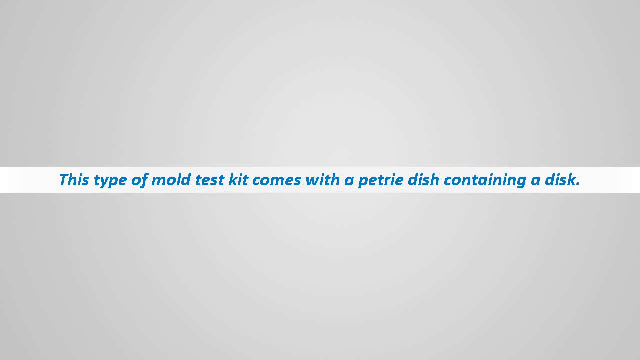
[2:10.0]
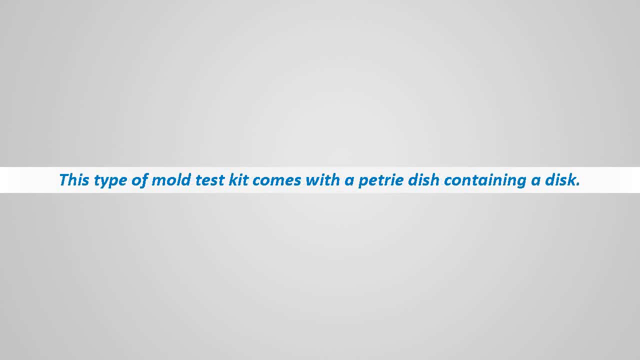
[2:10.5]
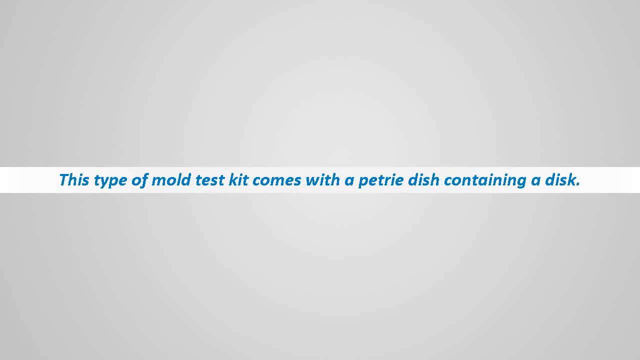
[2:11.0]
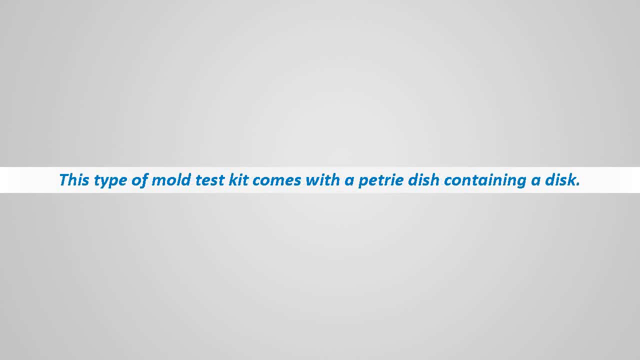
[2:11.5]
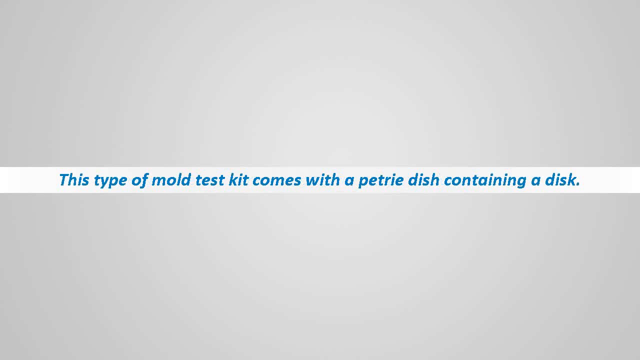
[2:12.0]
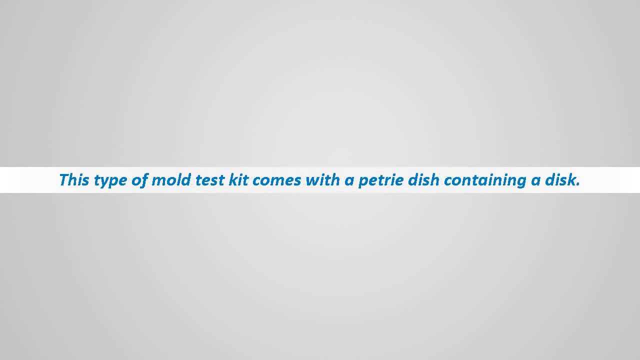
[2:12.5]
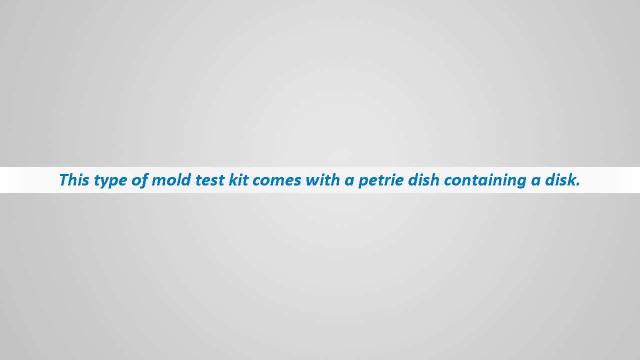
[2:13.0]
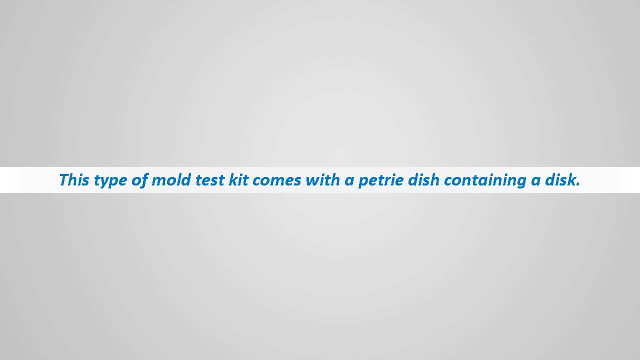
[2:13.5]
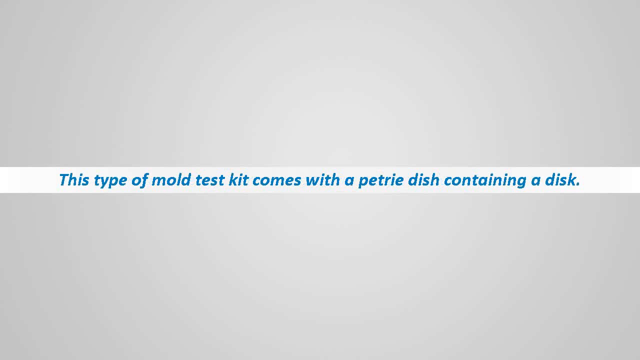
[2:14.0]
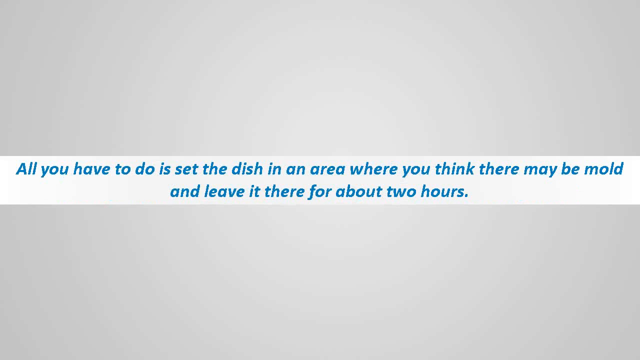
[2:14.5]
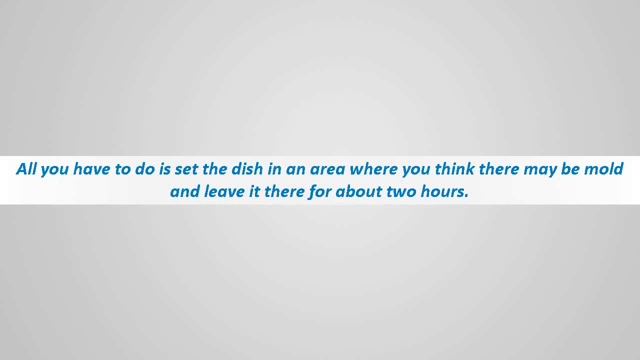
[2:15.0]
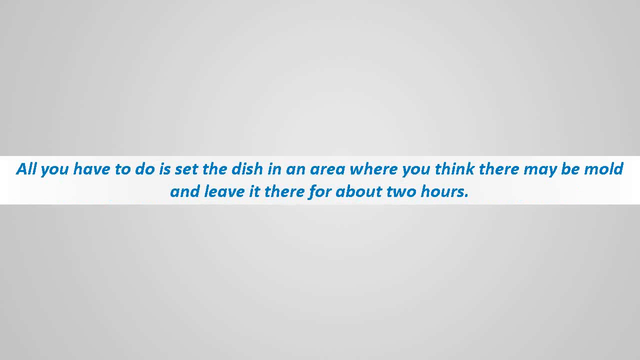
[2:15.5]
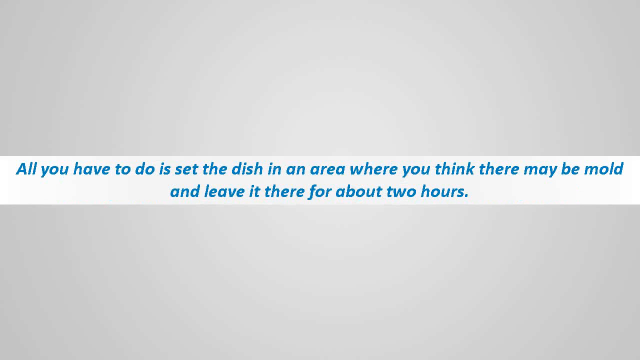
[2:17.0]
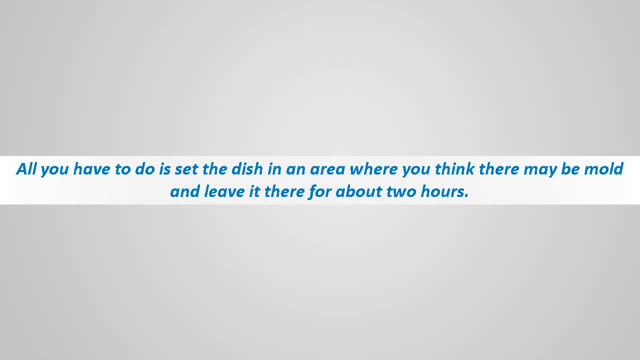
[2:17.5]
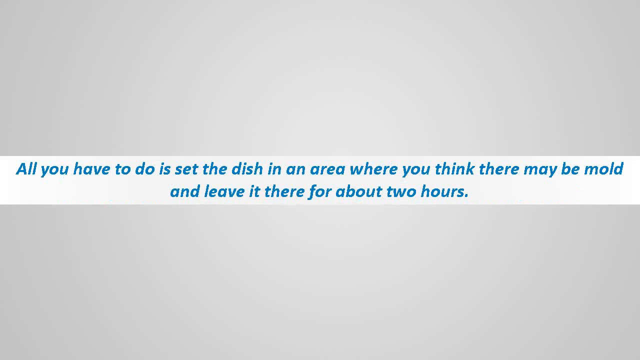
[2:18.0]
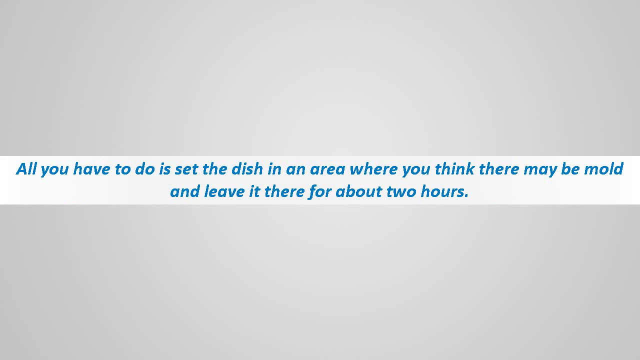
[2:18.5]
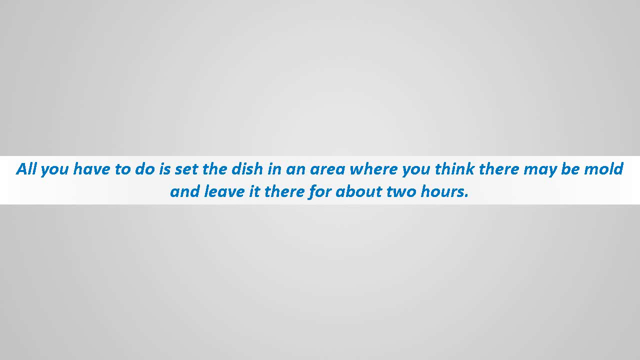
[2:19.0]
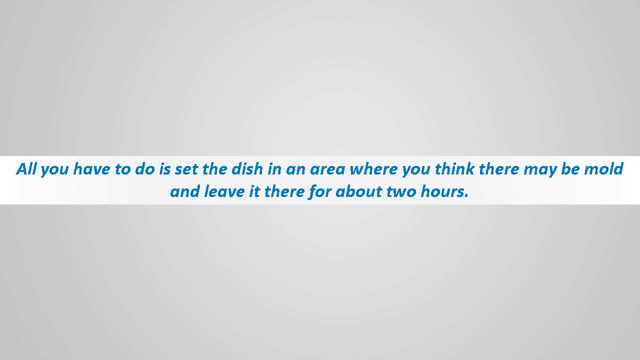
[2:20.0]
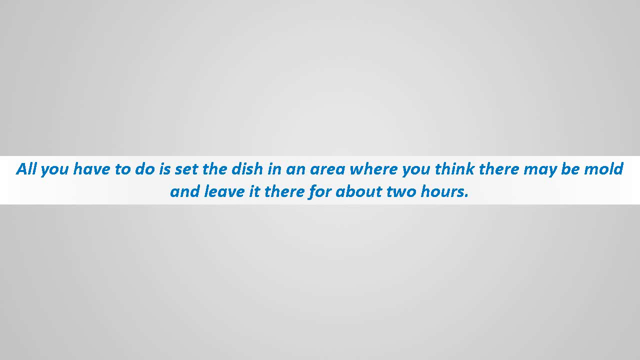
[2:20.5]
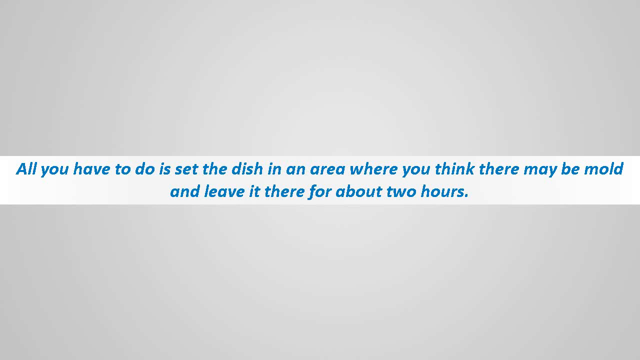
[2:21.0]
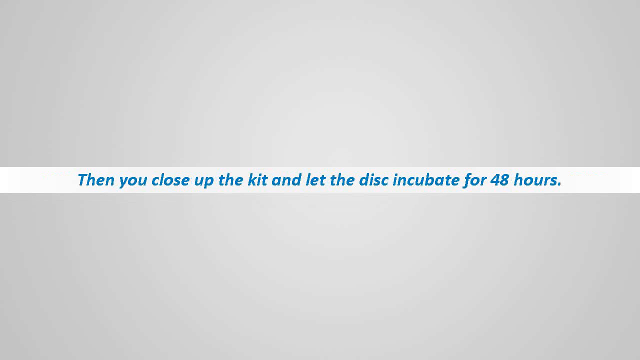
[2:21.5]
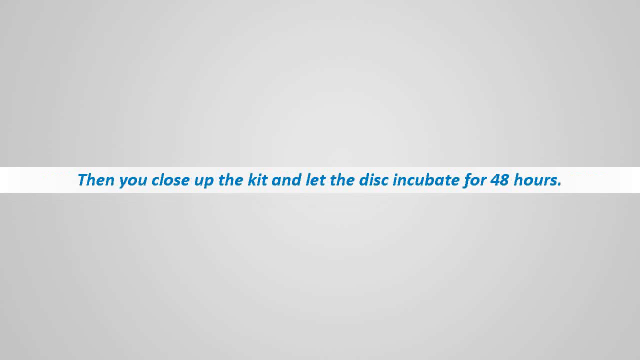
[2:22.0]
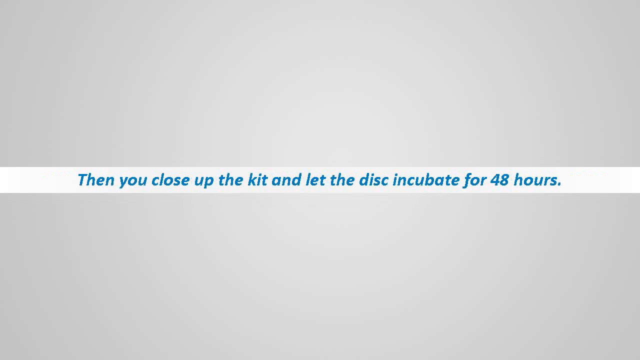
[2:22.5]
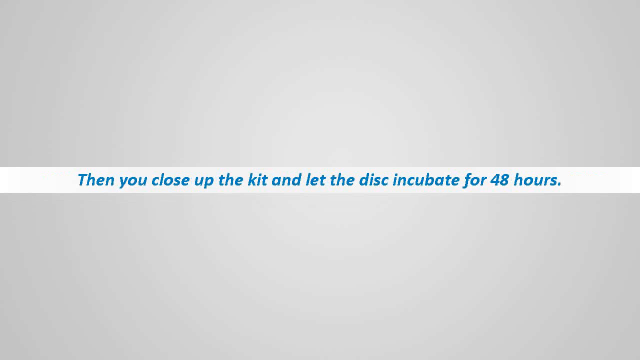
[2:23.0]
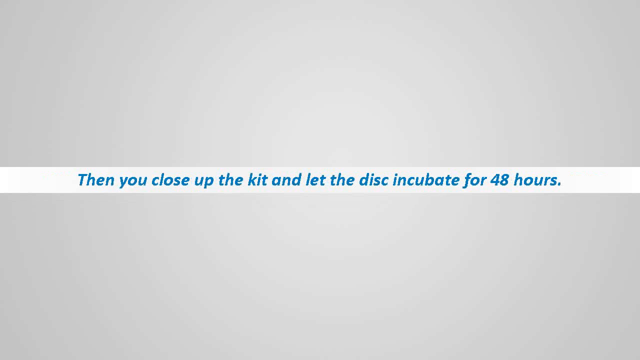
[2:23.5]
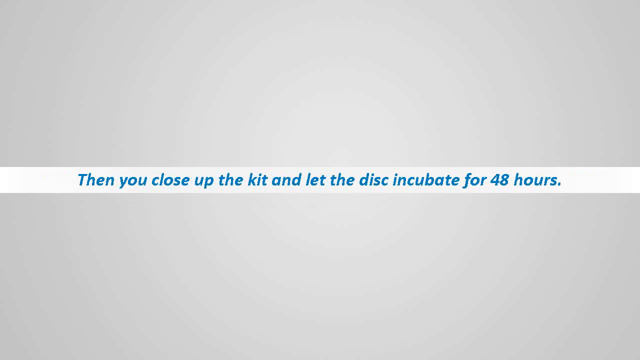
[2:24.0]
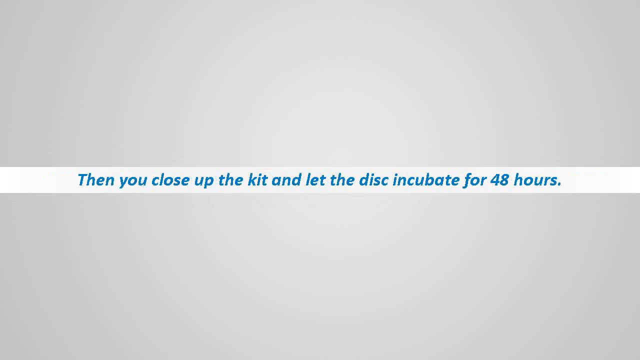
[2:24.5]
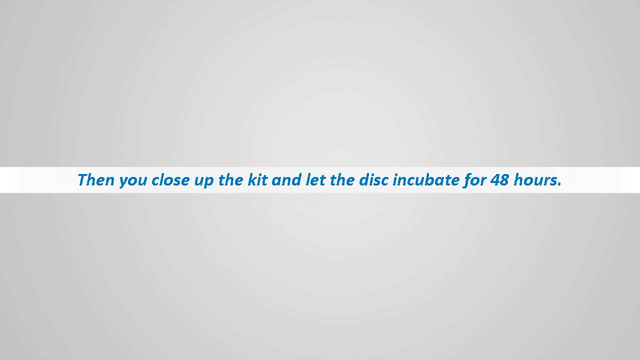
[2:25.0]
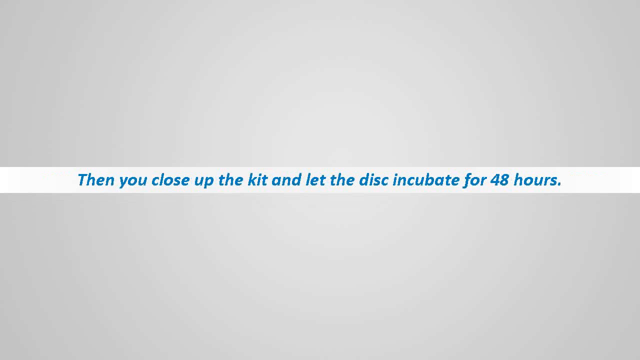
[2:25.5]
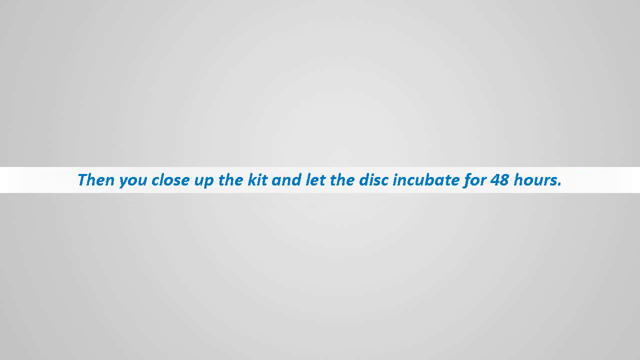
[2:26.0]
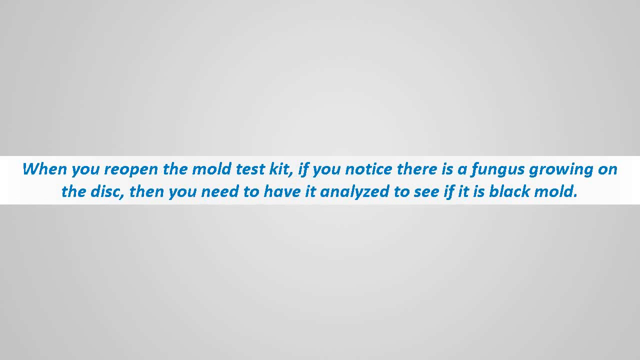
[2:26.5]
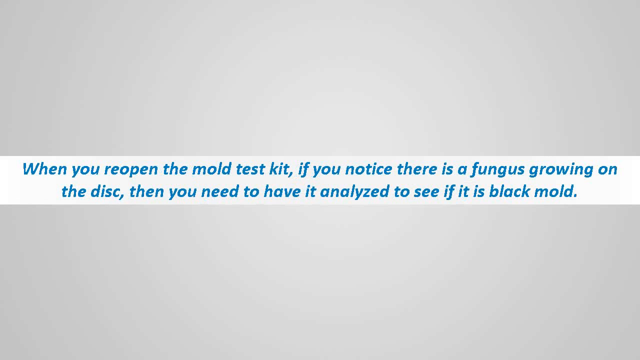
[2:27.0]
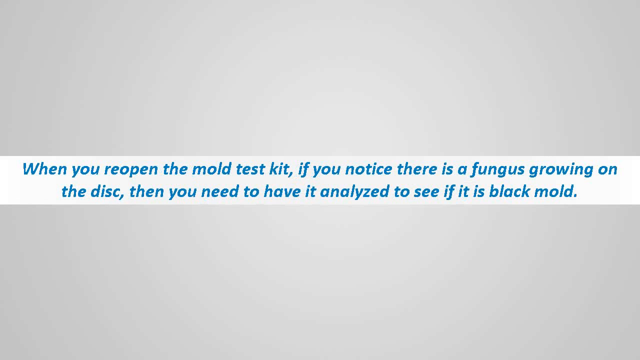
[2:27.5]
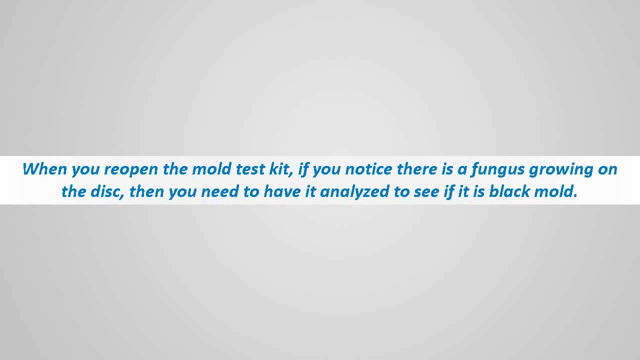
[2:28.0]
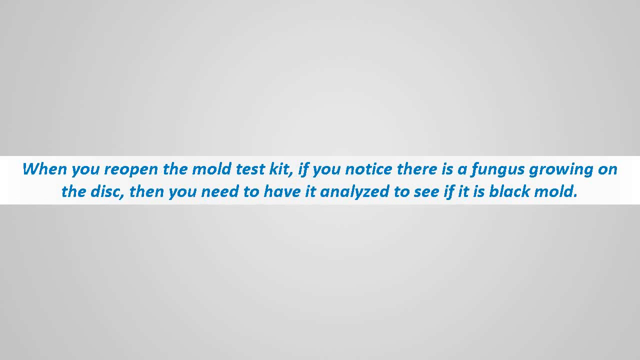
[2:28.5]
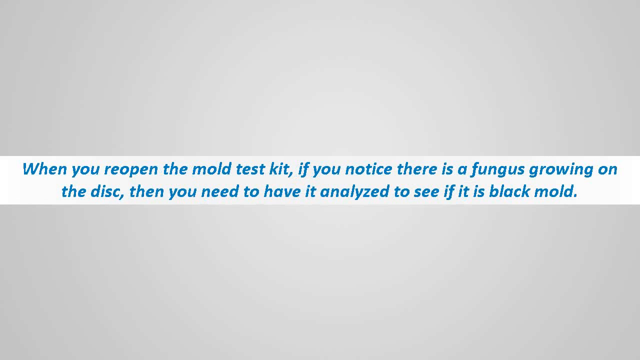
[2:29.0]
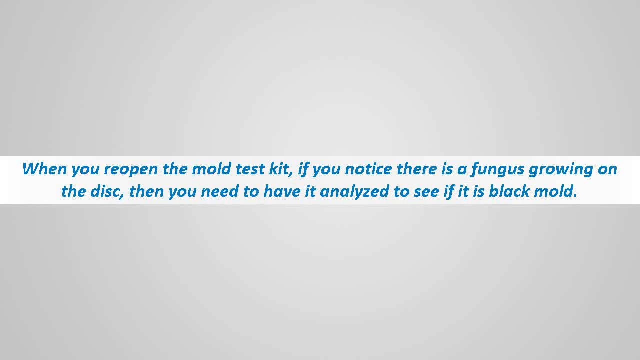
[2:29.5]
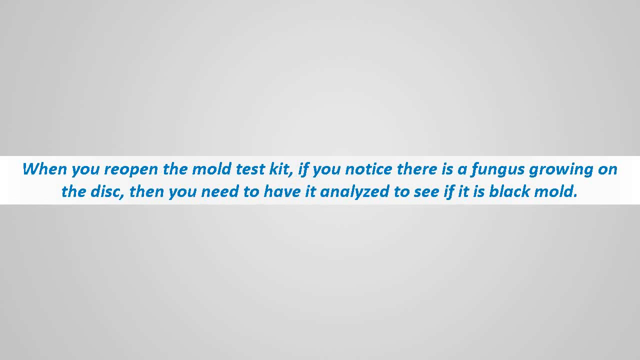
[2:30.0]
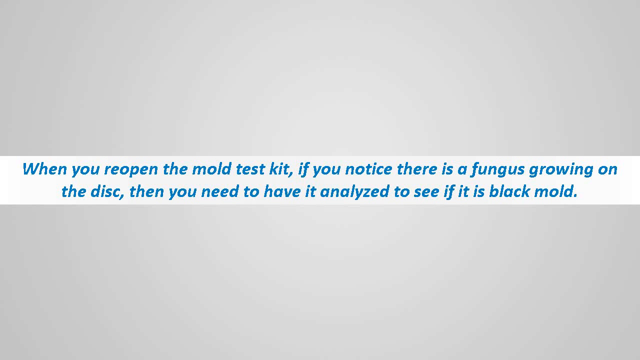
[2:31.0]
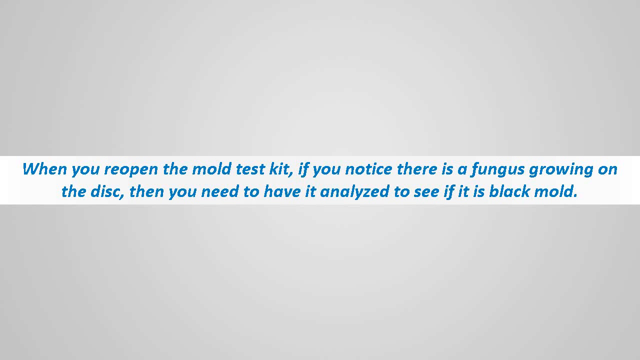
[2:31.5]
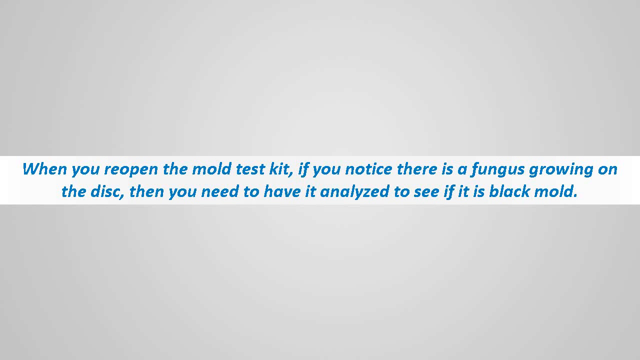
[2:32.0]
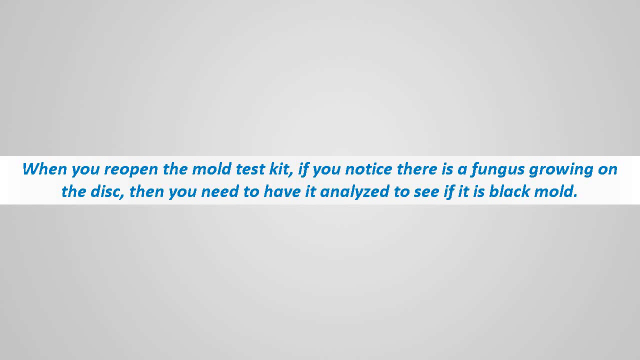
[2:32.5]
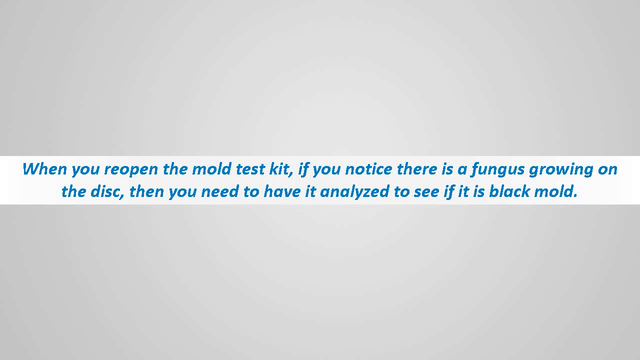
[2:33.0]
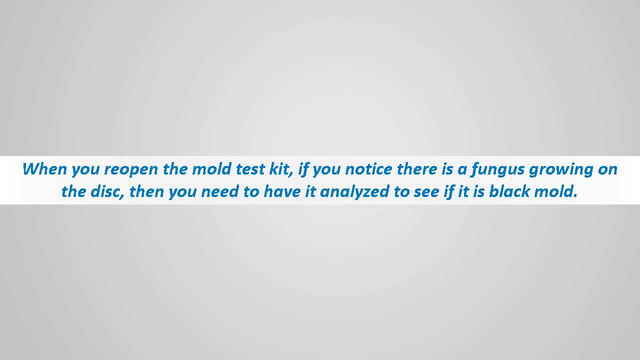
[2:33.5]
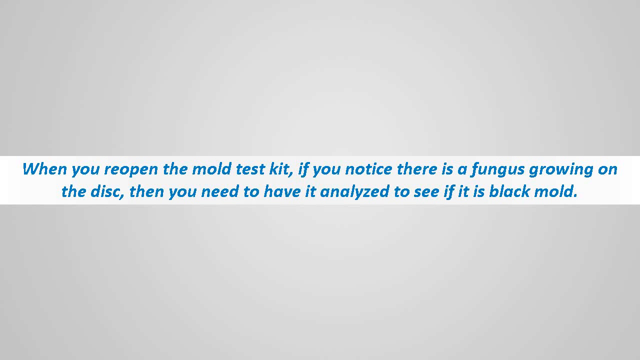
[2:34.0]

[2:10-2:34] The gray background with the white strip in the middle continues. The text reads "This type of mold test kit comes with a pastry dish containing a disc." and "All you have to do is set the dish in the area where you think there may be mold and leave it there for about two hours." Further text says "Then you close up the kit and let the disc incubate for 48 hours." and "When you reopen the mold test kit, if you notice there is fungus grown on the disc, then you need to have it analyzed to see if it is black mold."